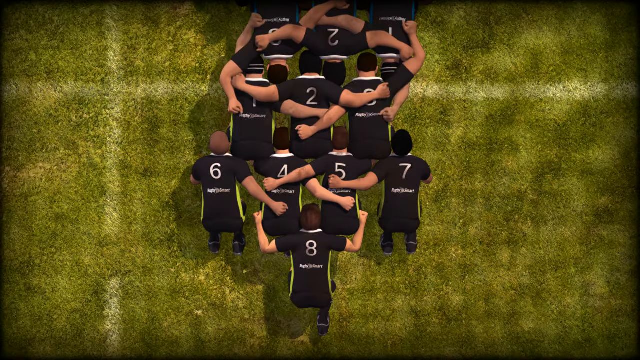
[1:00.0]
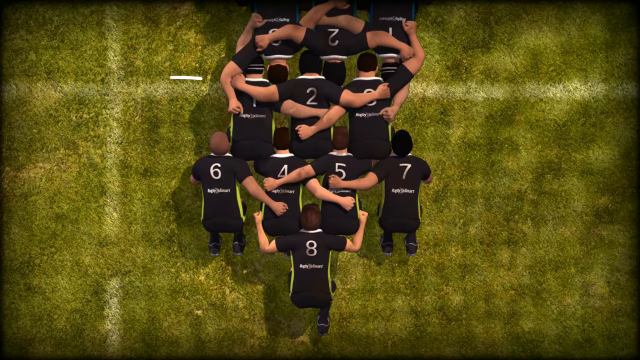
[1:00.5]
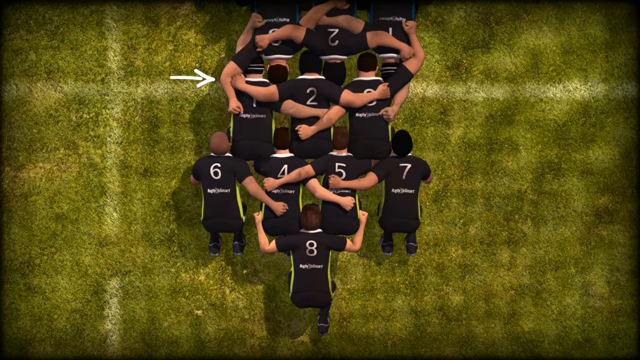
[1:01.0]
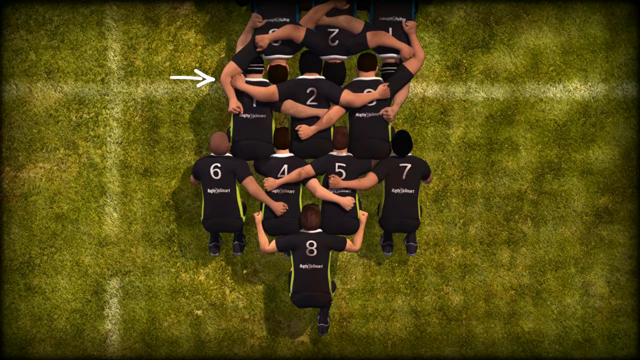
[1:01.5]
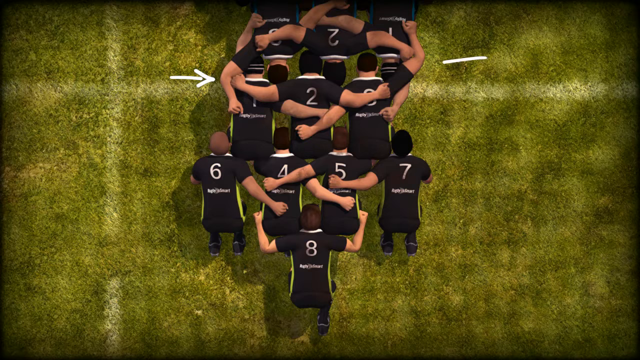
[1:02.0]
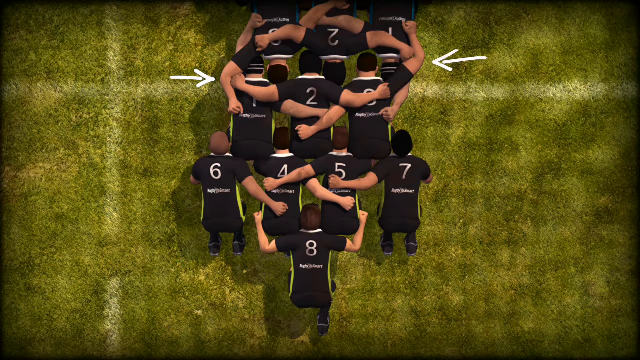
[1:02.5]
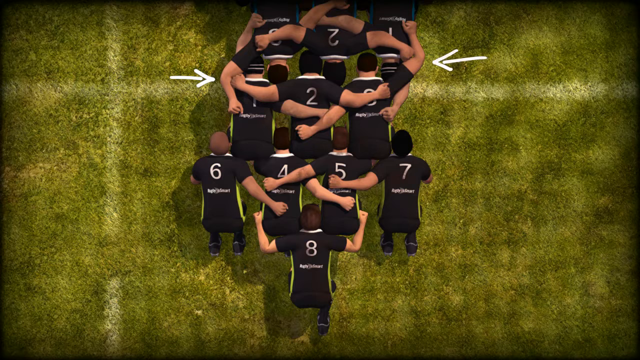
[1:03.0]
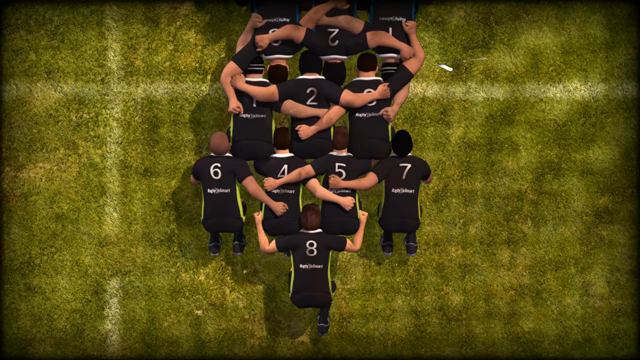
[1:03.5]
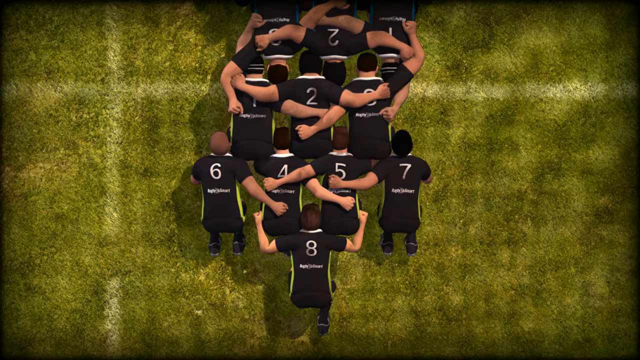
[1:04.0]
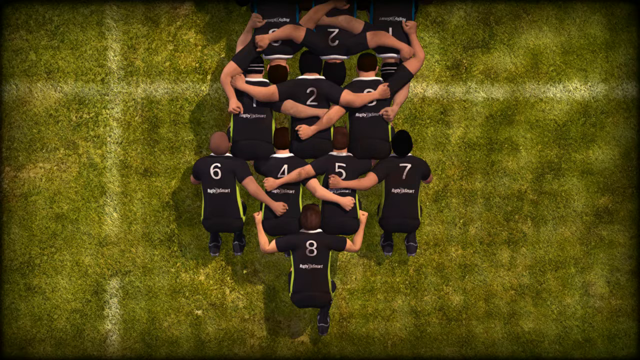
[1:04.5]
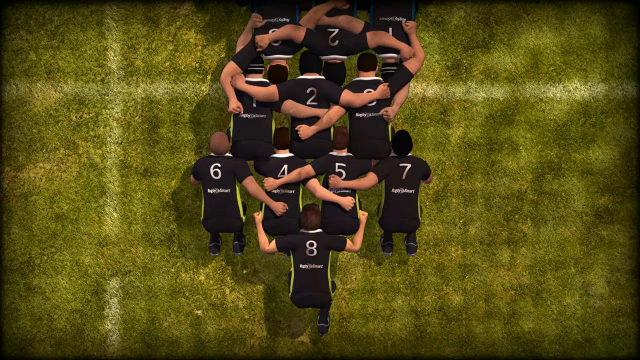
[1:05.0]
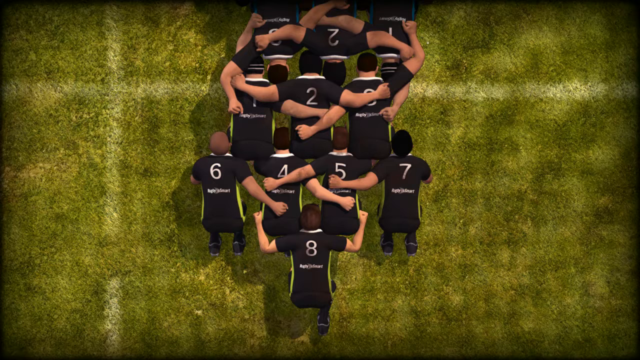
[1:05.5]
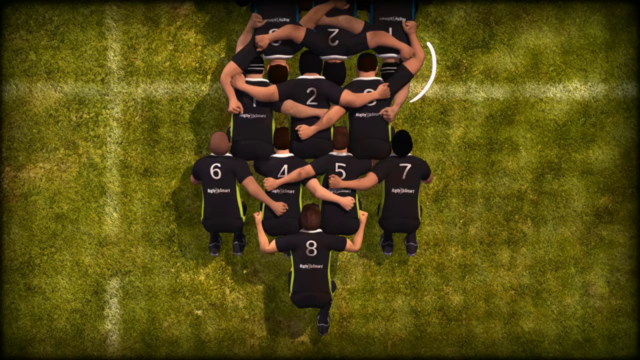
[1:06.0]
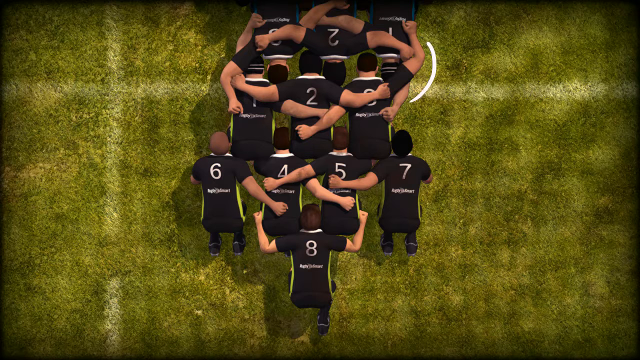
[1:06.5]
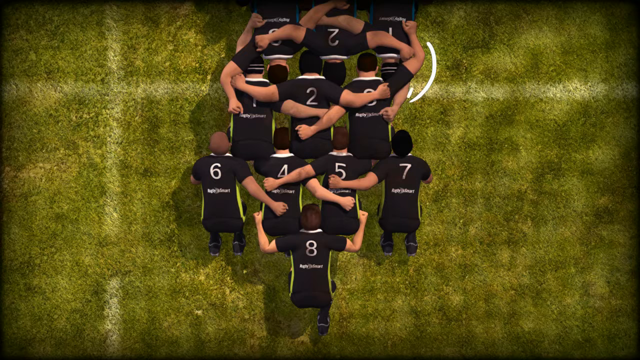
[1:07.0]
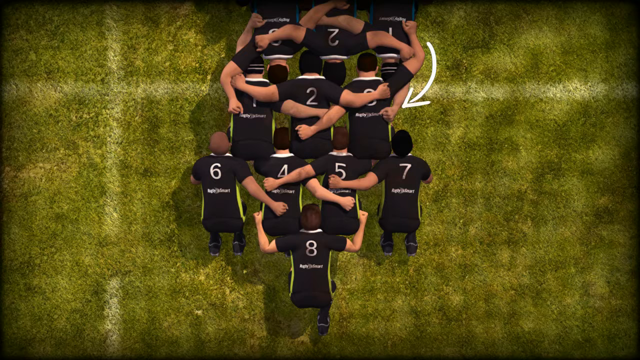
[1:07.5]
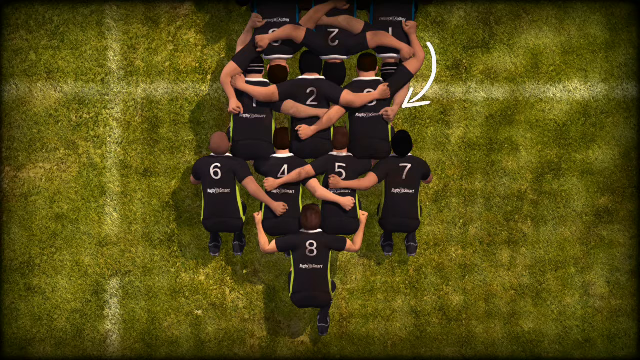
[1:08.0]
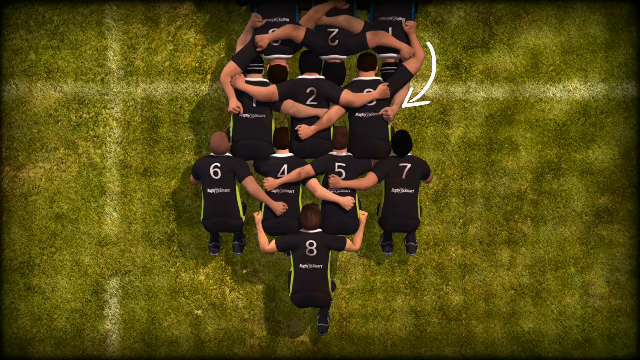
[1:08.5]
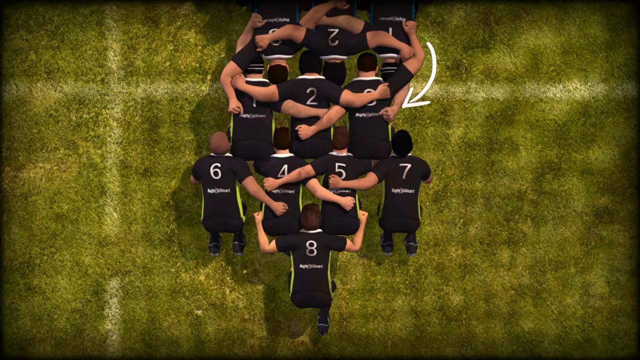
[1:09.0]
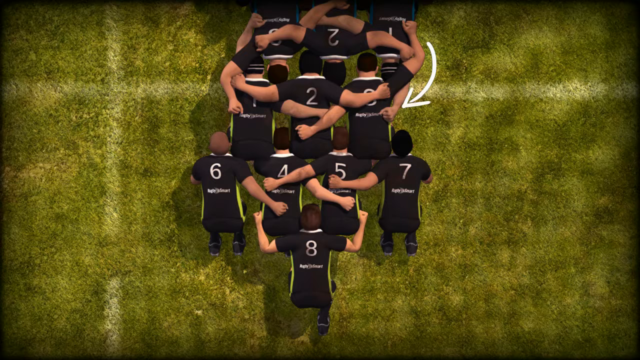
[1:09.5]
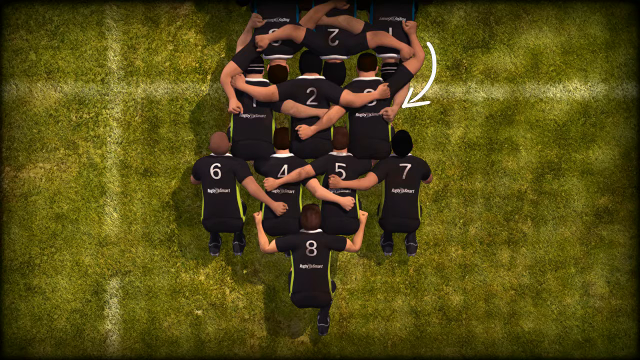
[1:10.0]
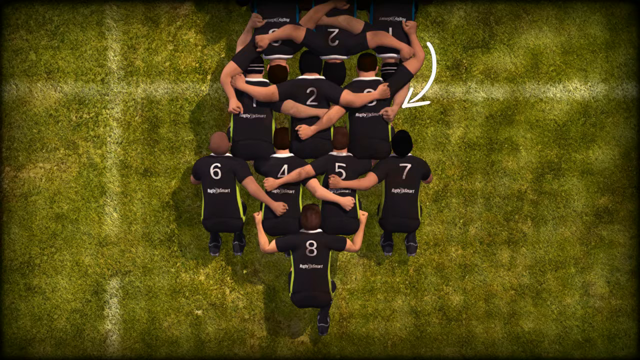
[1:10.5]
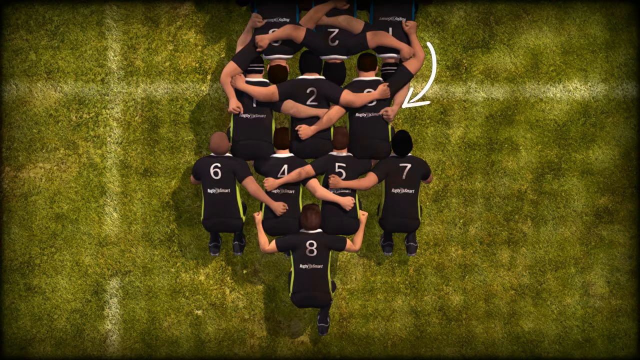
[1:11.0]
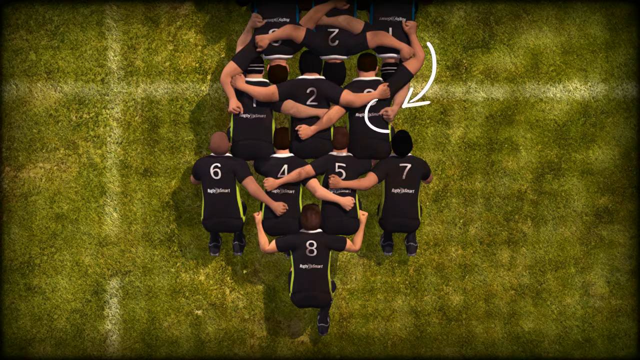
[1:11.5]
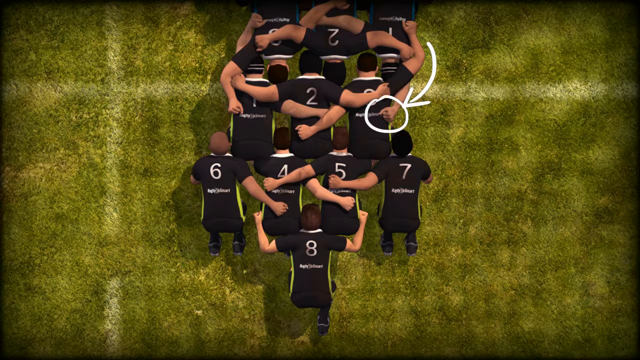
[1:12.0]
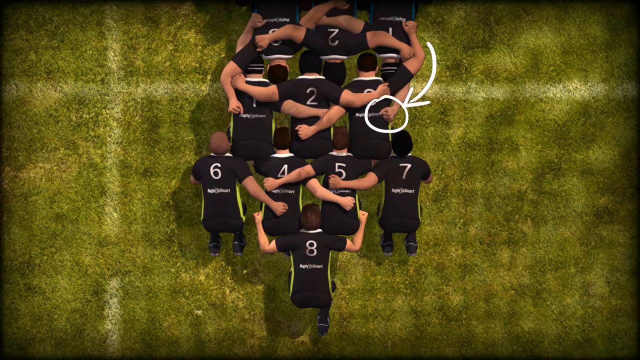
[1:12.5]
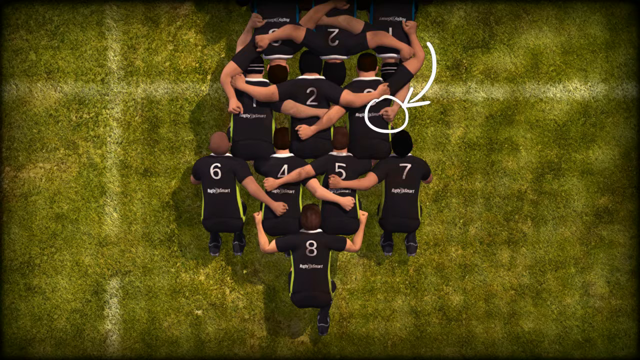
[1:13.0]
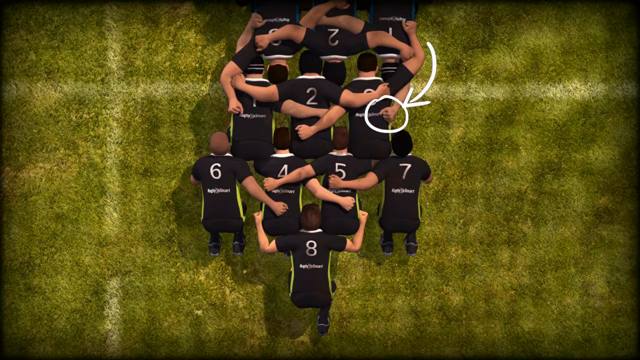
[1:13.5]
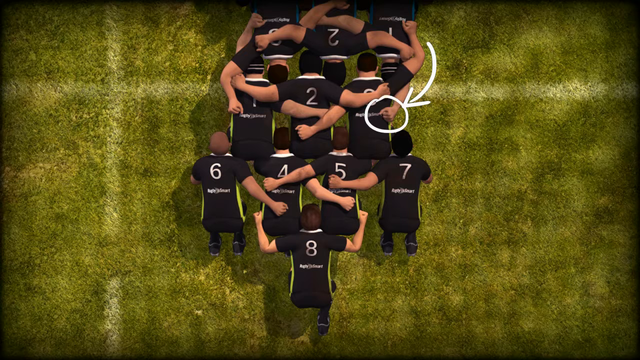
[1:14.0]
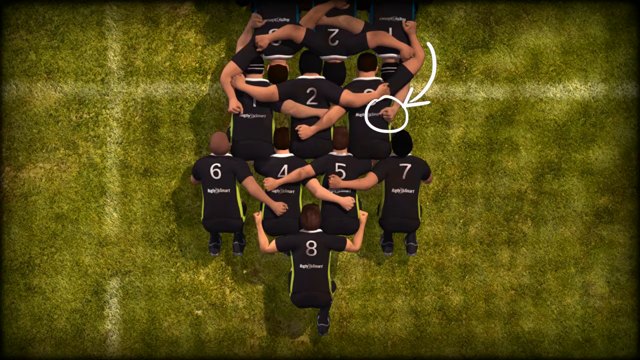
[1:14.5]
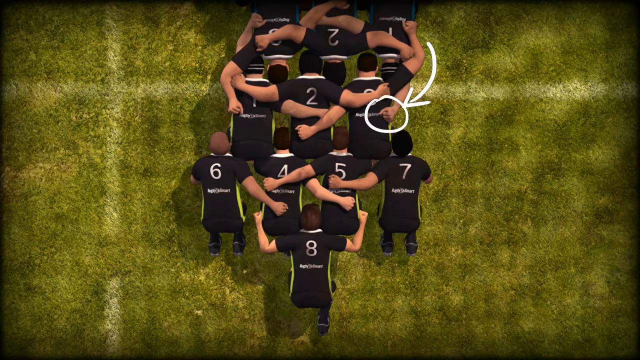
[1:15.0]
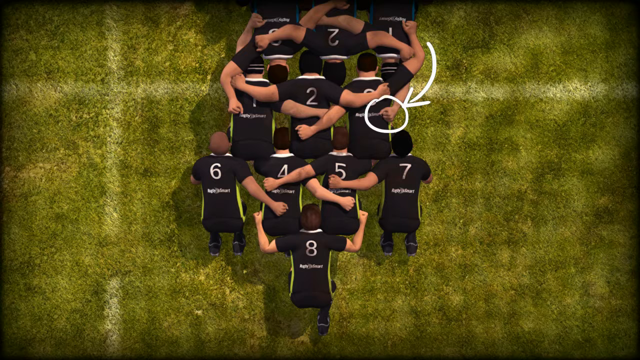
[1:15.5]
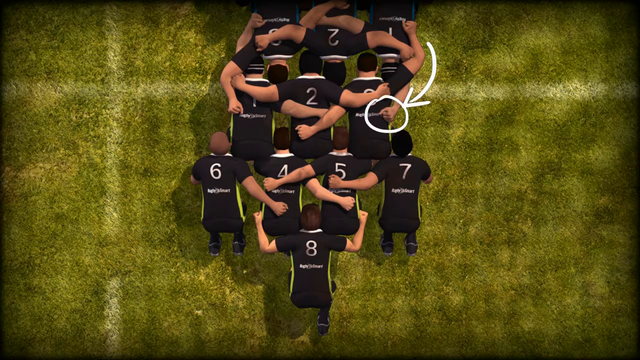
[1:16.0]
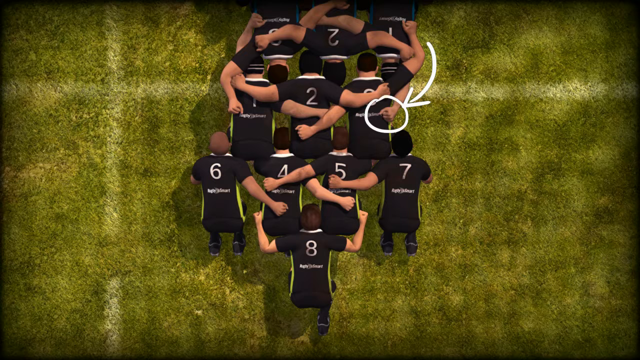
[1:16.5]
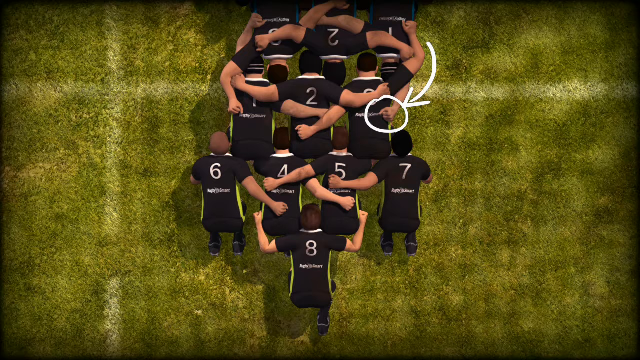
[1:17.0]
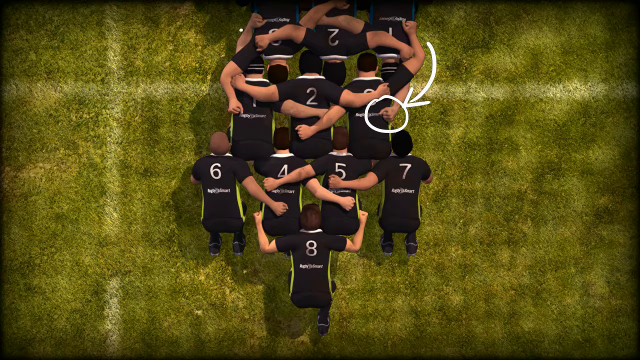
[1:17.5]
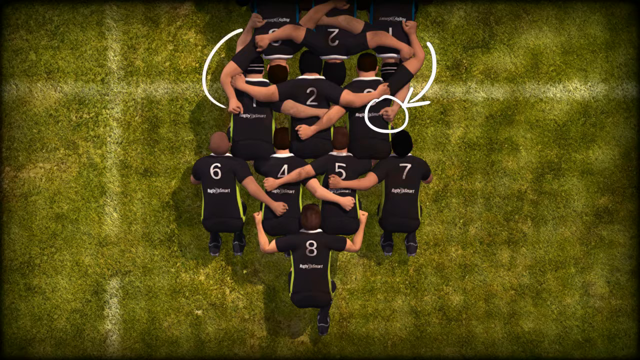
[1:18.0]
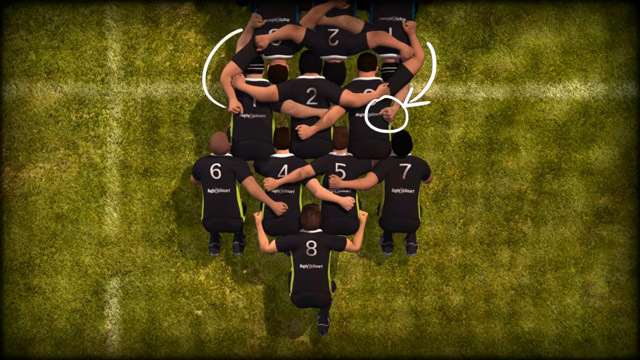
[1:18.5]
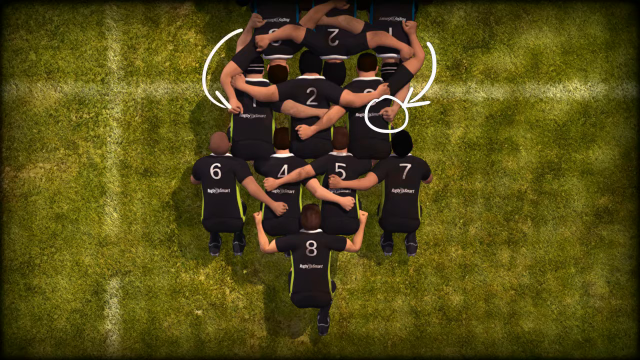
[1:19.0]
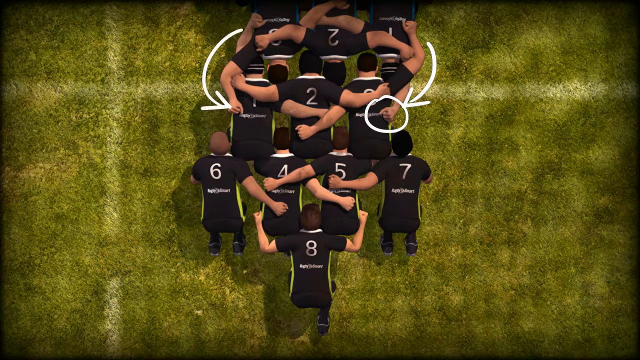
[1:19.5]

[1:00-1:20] The three-dimensional animation of a rugby union scrum continues, now from a bird's eye view. The first team's front row consists of three players whose arms are intertwined, around each other's shoulders or waists. The second row consists of four players who are also intertwined with one another using their shoulders and waists, and at the back, the third row has one player with his arms around the waists of two second-row players. Two white arrows are drawn, one from each side, pointing to front-row players. A rounded arrow is then drawn pointing to one of the front-row players. A circle is drawn around the wrist of one of the players holding on to the opposition player on the front row. Another arrow is then drawn in a somewhat similar fashion, this time on the other side.